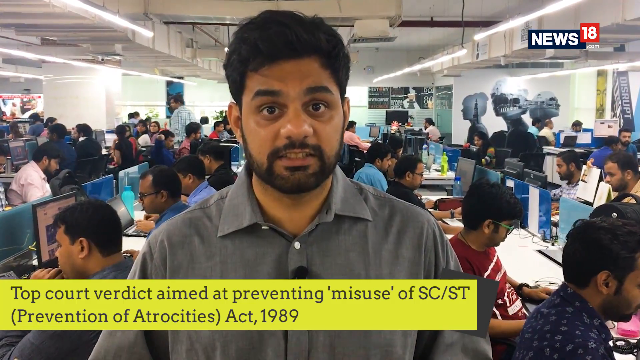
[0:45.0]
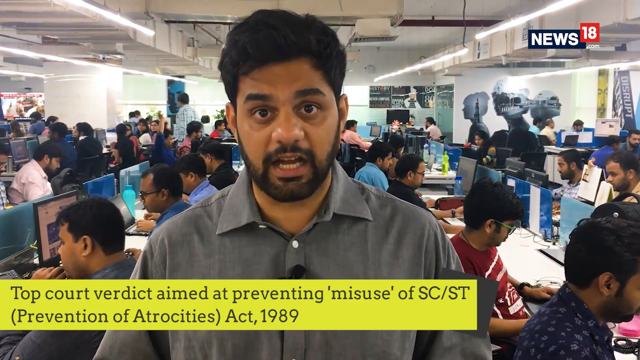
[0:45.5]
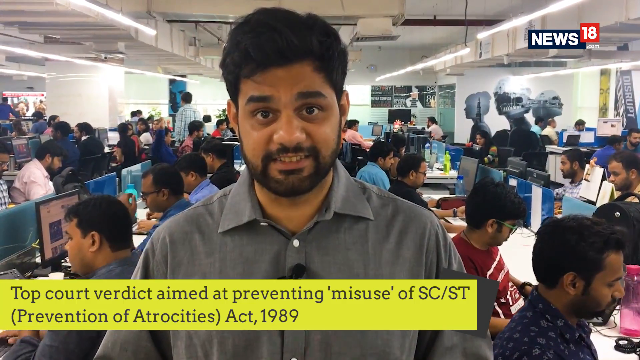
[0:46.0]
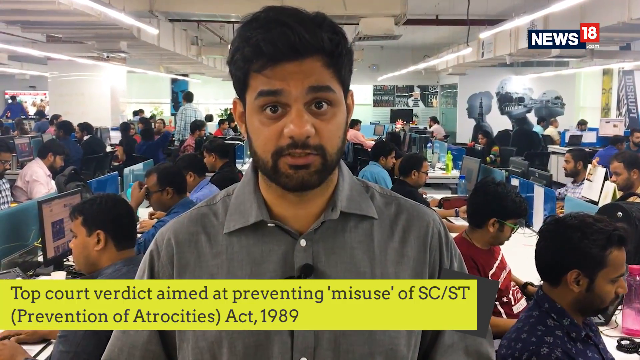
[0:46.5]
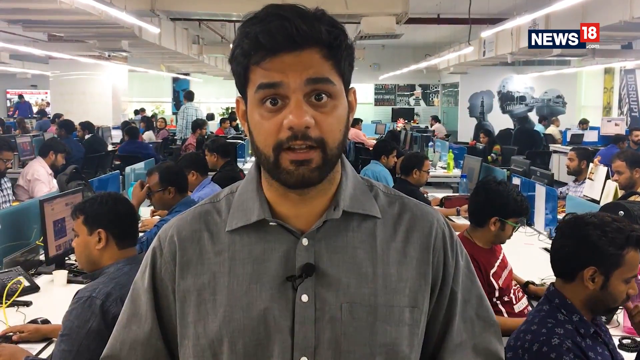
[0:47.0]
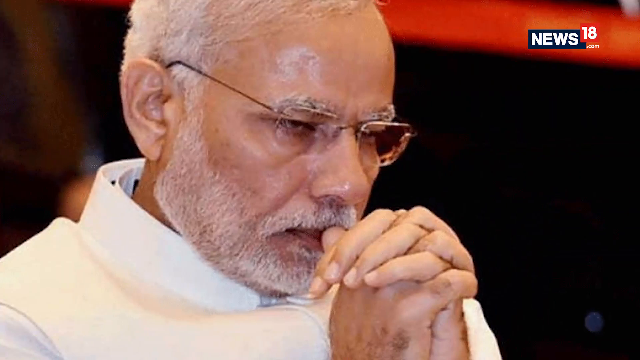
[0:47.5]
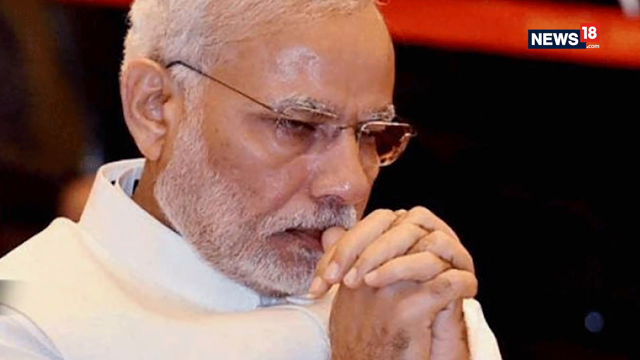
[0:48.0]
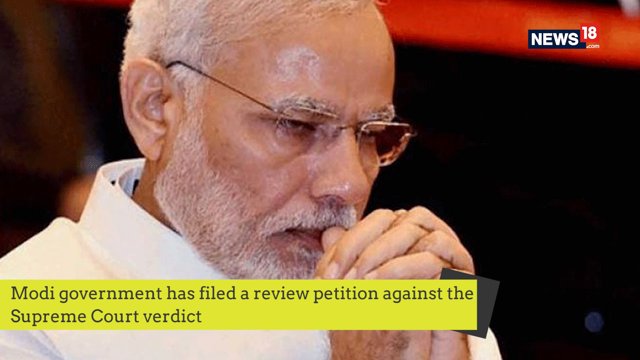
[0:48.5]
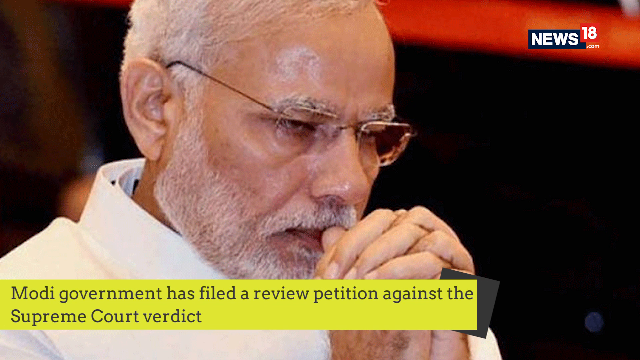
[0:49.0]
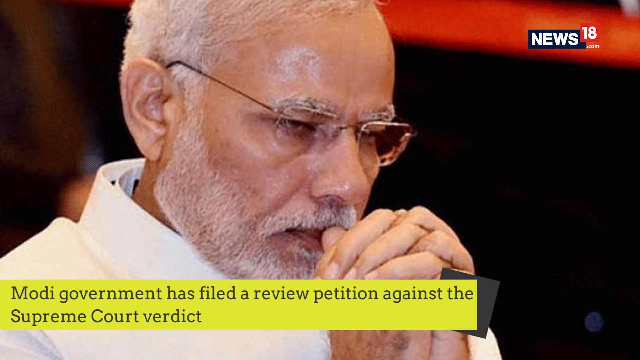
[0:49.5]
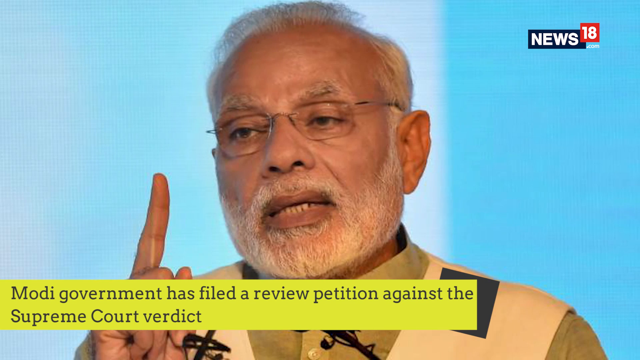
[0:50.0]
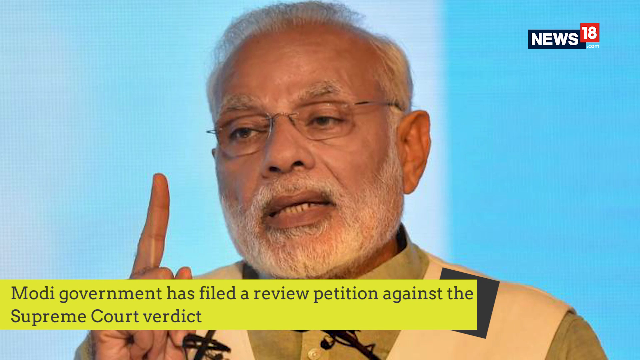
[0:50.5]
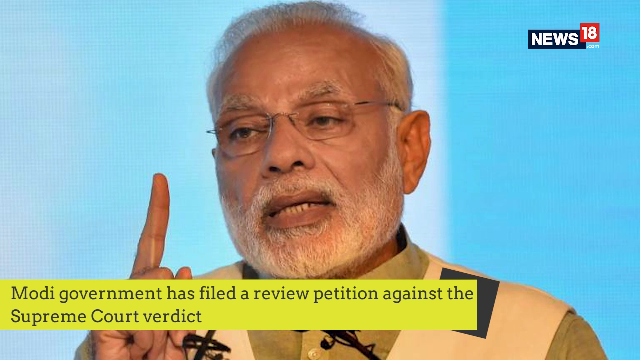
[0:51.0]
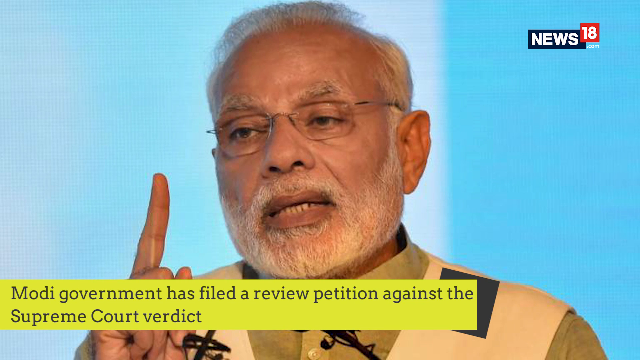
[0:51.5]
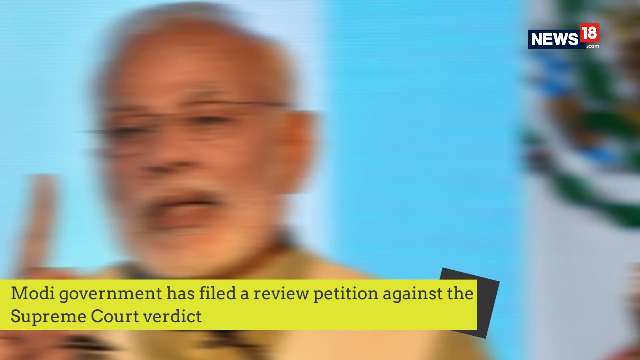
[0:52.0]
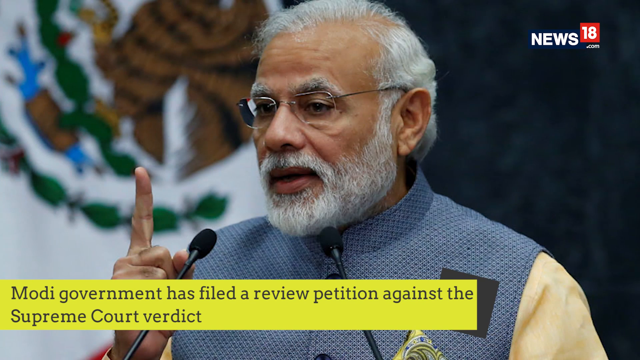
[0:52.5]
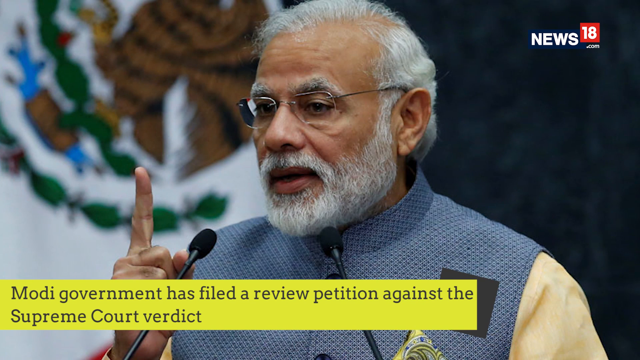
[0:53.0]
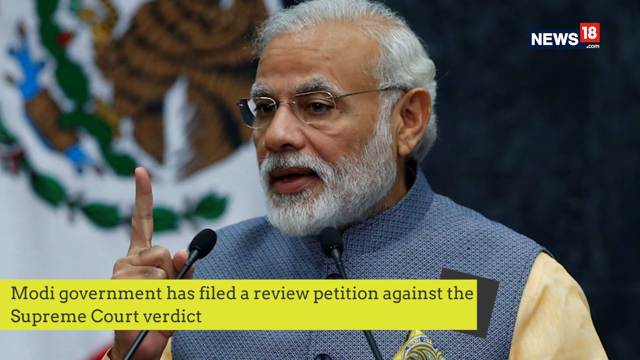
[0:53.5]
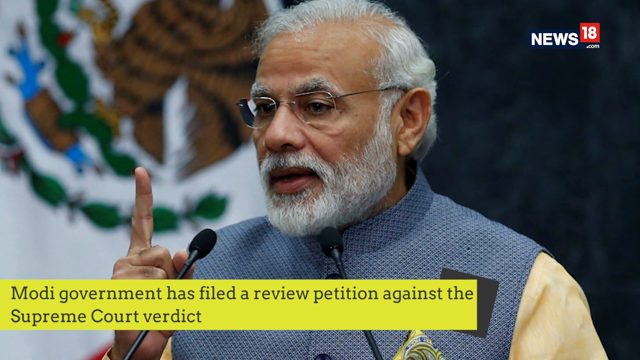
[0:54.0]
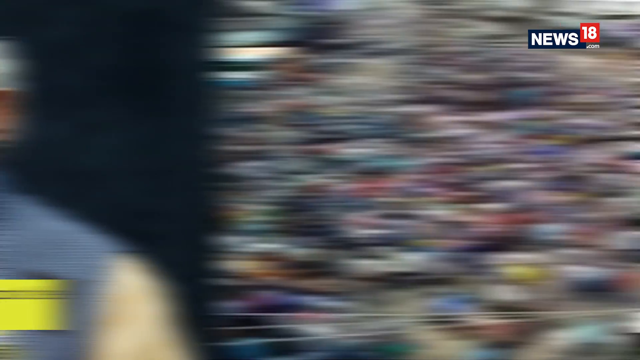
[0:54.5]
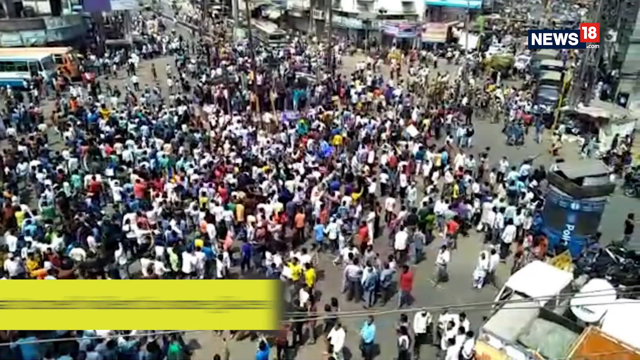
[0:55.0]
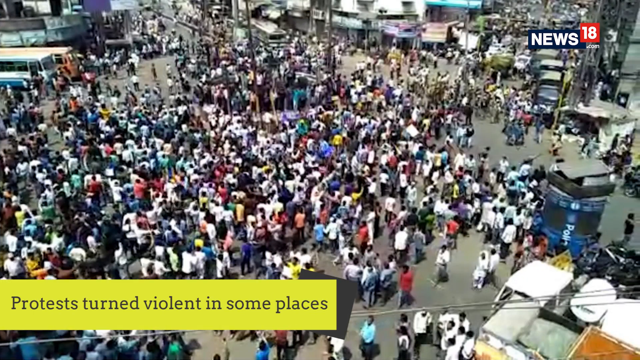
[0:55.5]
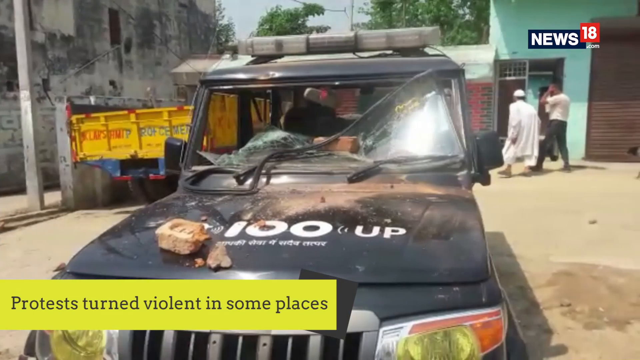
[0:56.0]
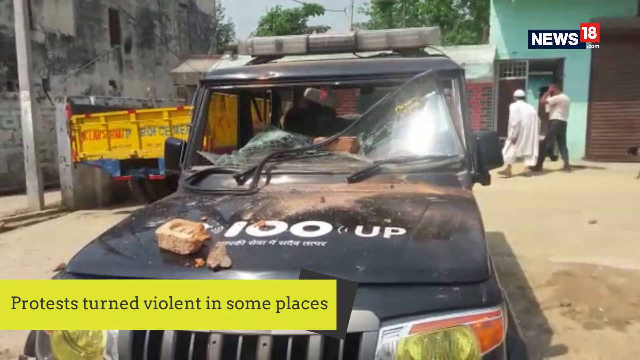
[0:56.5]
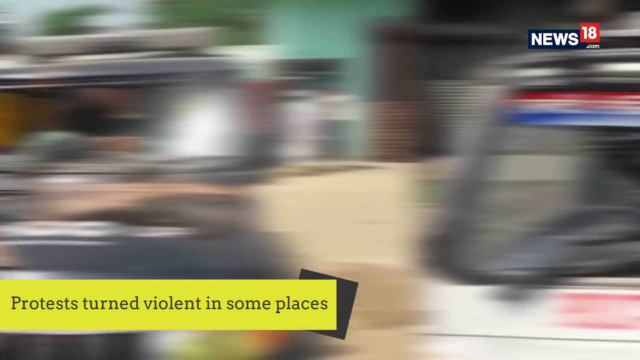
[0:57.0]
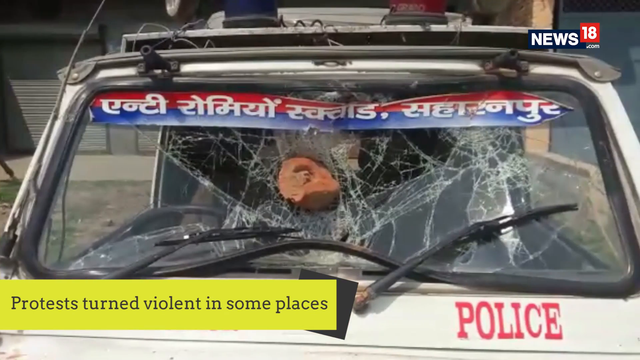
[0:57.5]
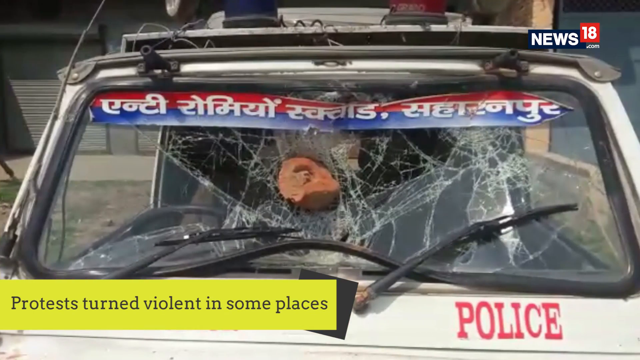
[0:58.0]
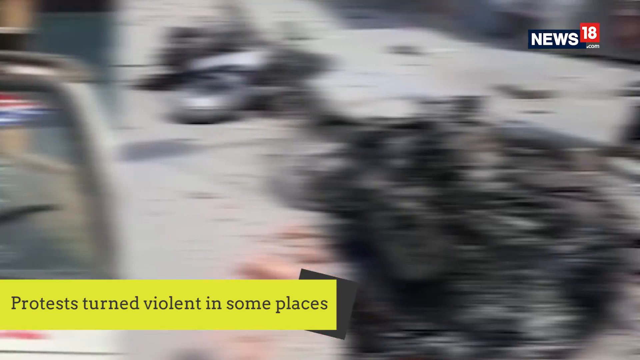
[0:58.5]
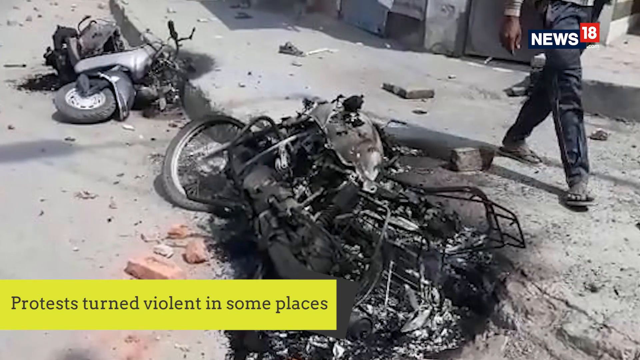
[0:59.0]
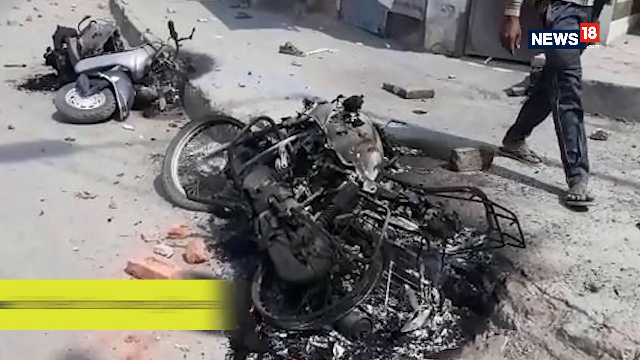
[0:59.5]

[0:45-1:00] The video, titled Bharat Bandh Why Dalits Took to the Streets to Protest, shows a newscaster from News18 in a newsroom with a text overlay at the bottom reading "top court verdict aimed at preventing misuse of SC/ST Prevention of Atrocities Act 1989". Next, a man who looks to be a government official is shown with text reading "Modi government has filed a review petition against the Supreme Court verdict", along with a picture of the man speaking. Crowds of people and protests follow, with burned-out cars and stones through windshields, and text reads "protests turned violent in some places" over a shot of a brick in a windshield. The video then repeats the newscaster in the newsroom, the government official, and the pictures of the devastation and damage from the protests.